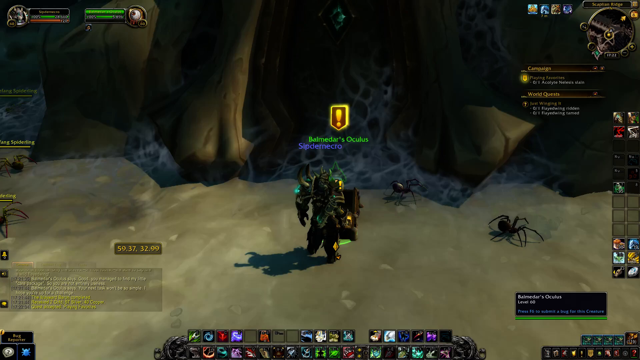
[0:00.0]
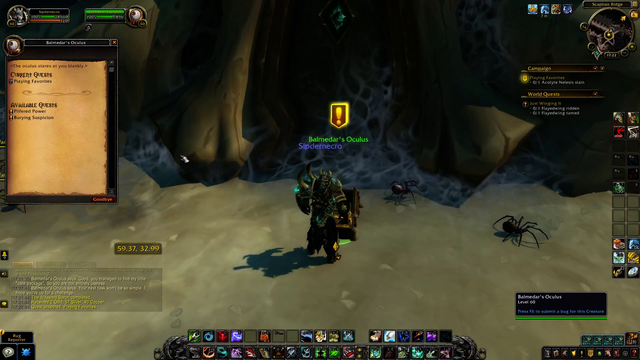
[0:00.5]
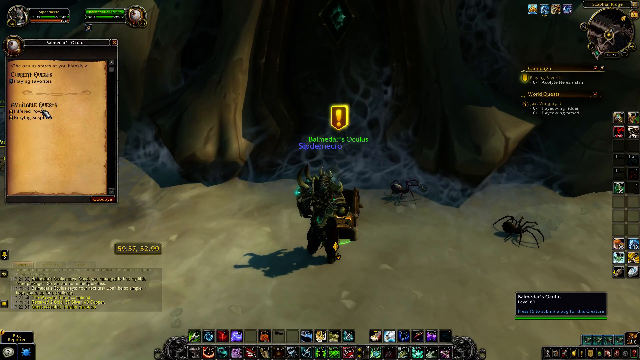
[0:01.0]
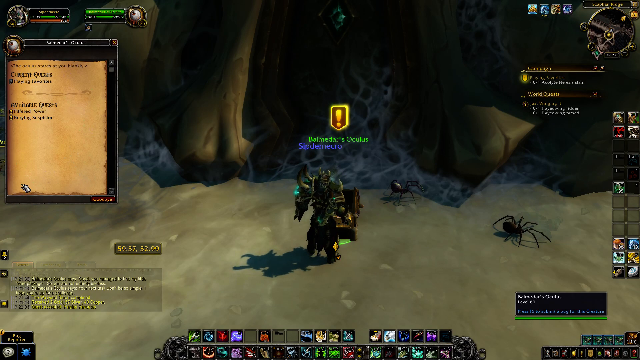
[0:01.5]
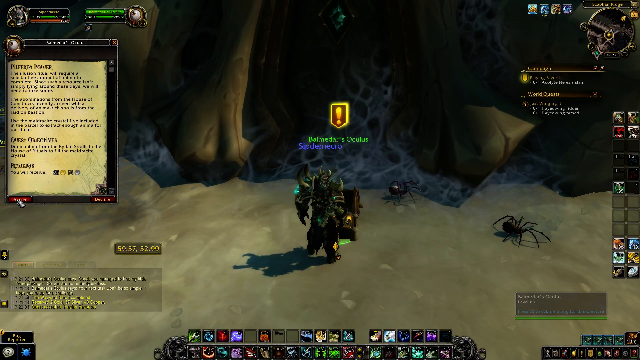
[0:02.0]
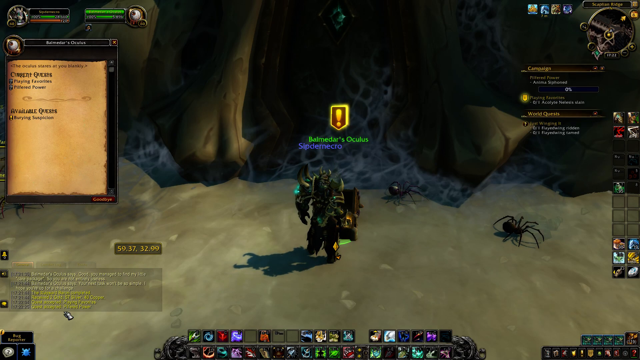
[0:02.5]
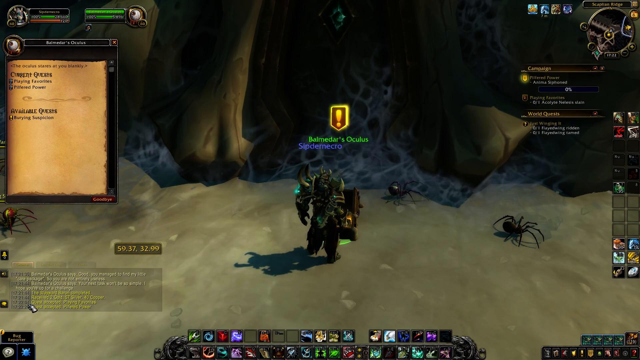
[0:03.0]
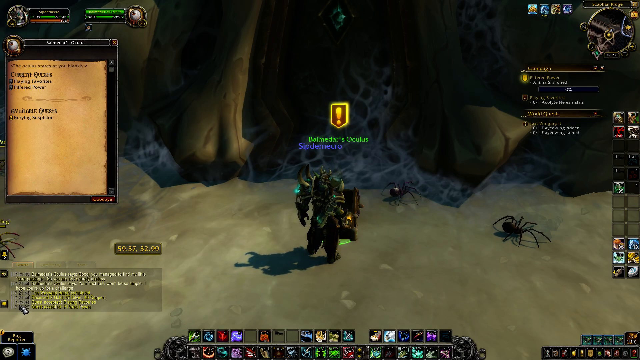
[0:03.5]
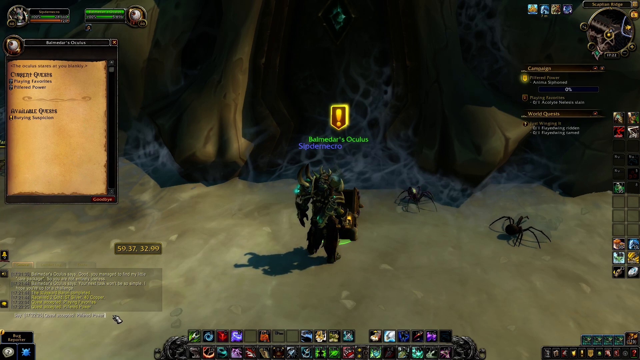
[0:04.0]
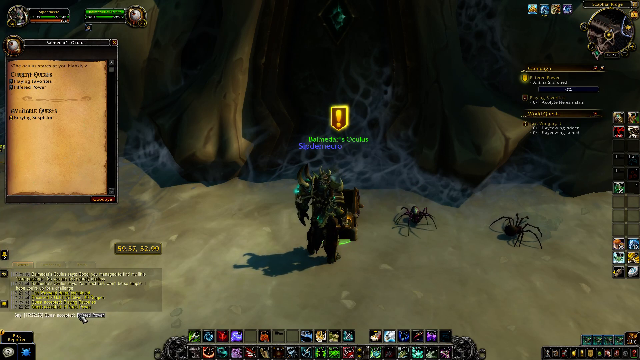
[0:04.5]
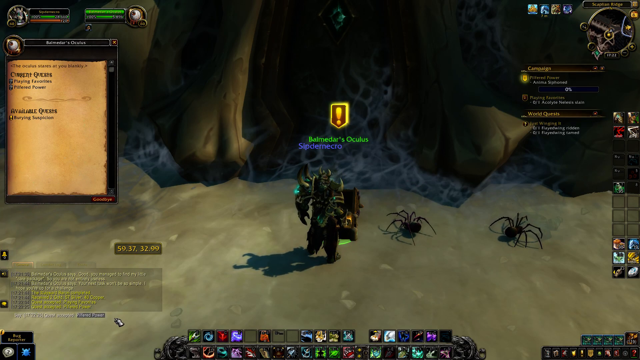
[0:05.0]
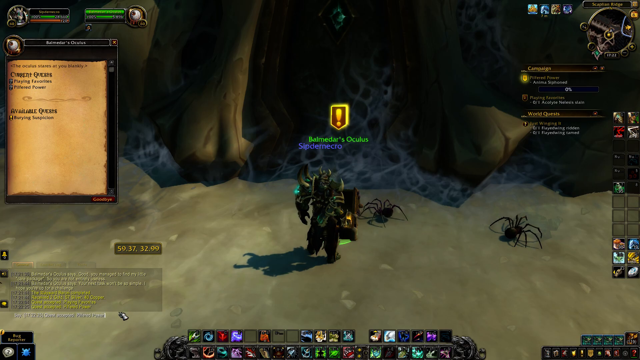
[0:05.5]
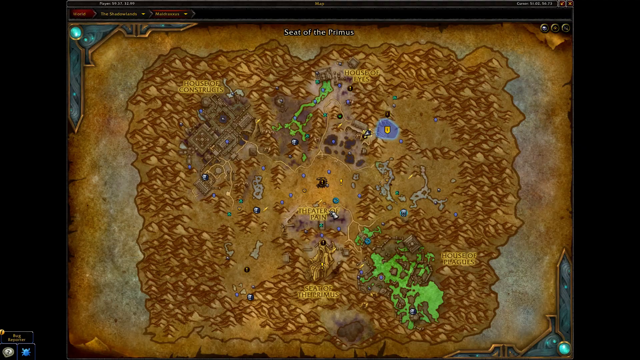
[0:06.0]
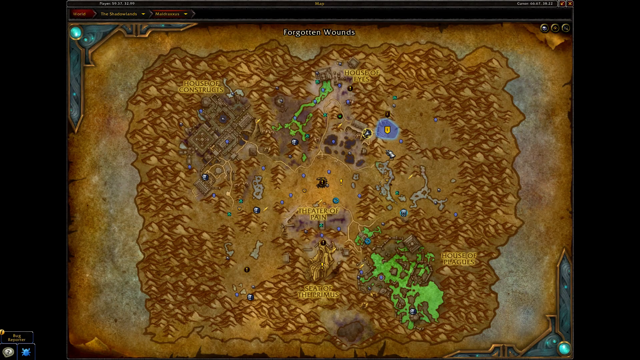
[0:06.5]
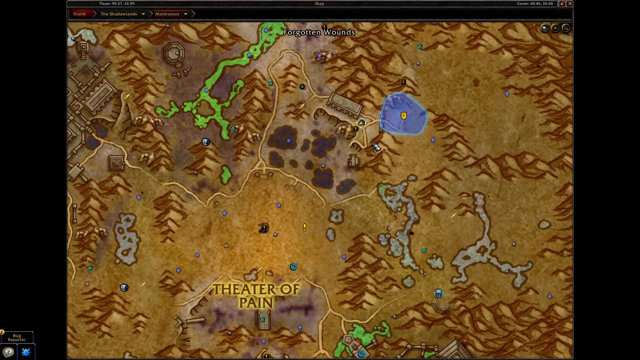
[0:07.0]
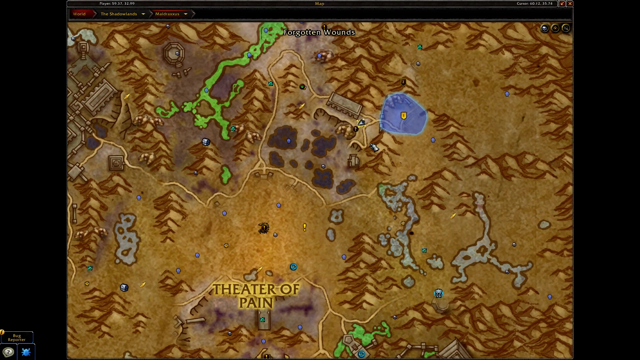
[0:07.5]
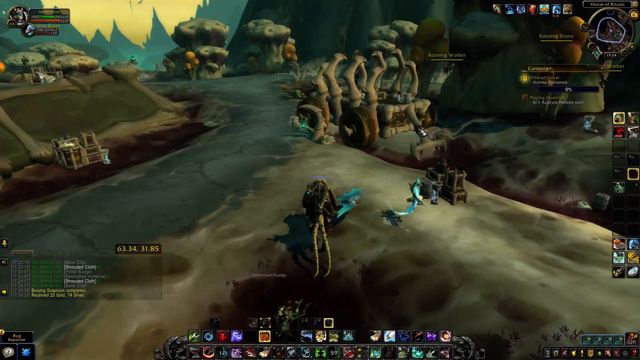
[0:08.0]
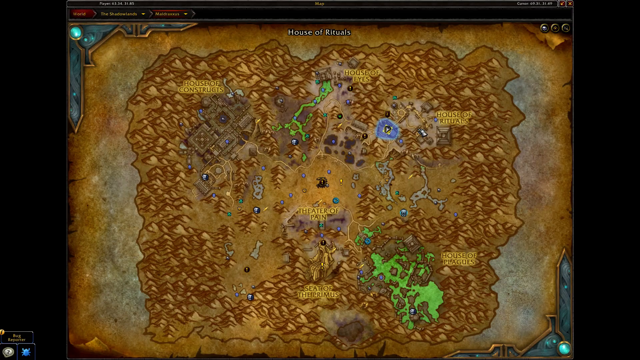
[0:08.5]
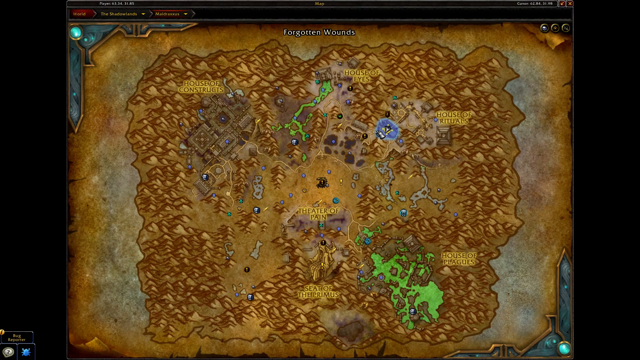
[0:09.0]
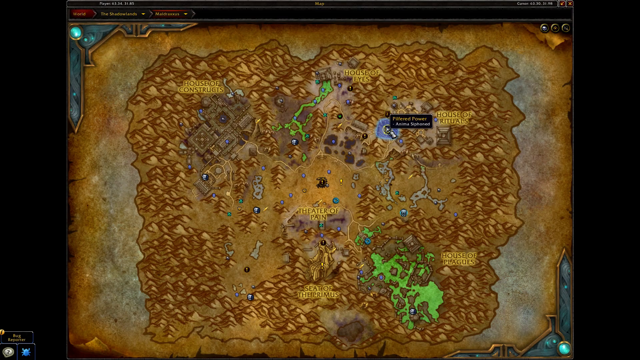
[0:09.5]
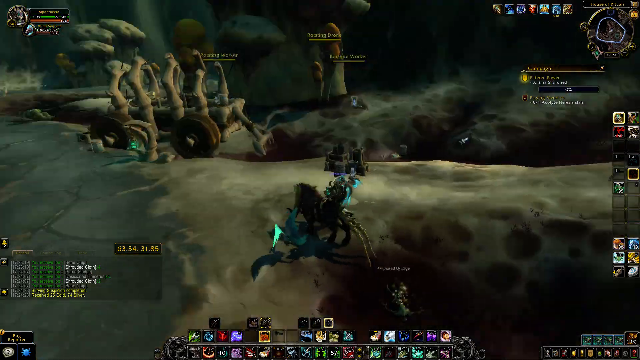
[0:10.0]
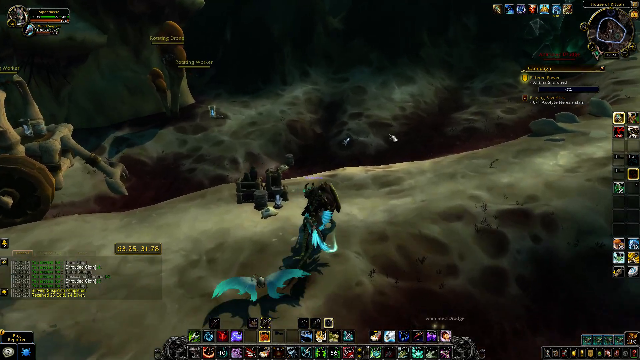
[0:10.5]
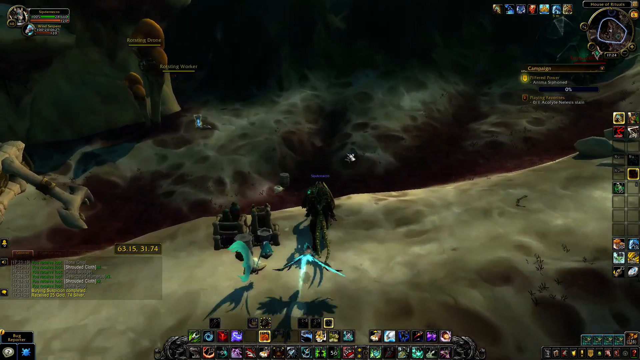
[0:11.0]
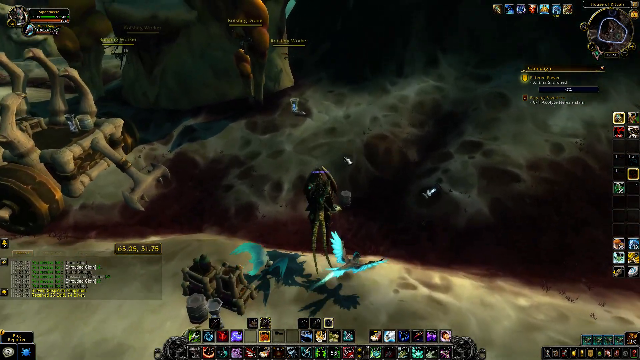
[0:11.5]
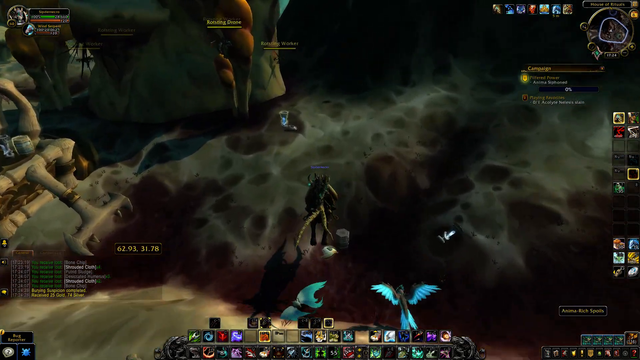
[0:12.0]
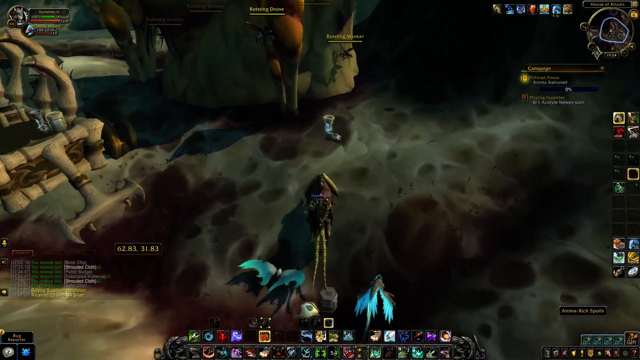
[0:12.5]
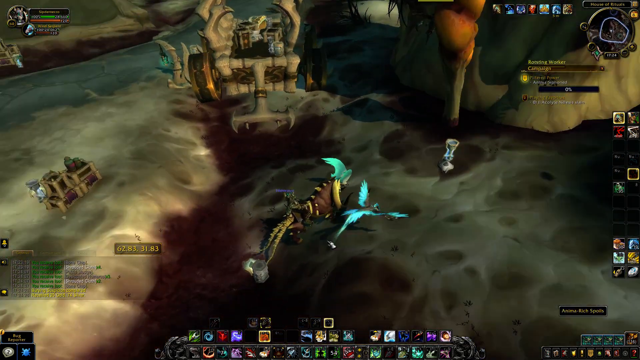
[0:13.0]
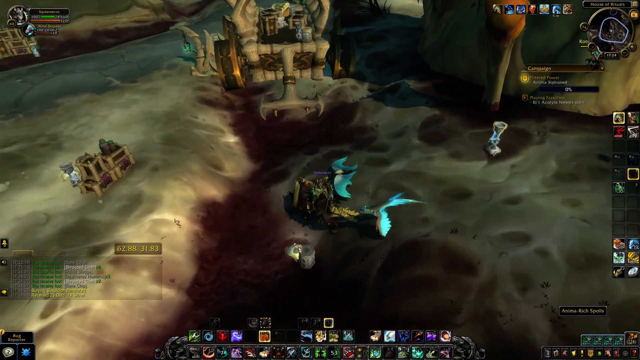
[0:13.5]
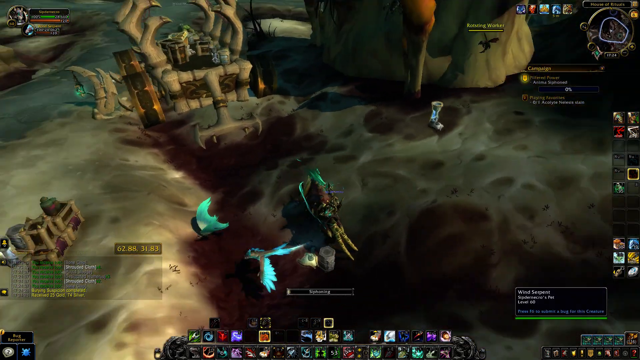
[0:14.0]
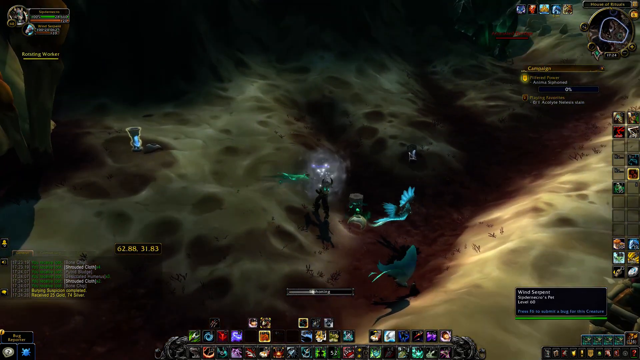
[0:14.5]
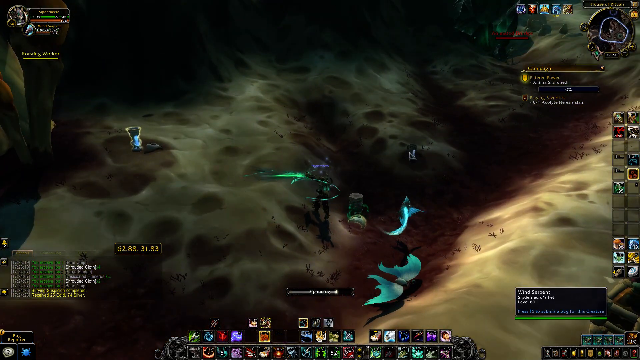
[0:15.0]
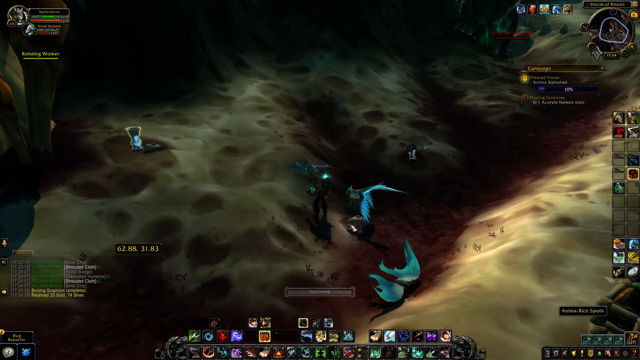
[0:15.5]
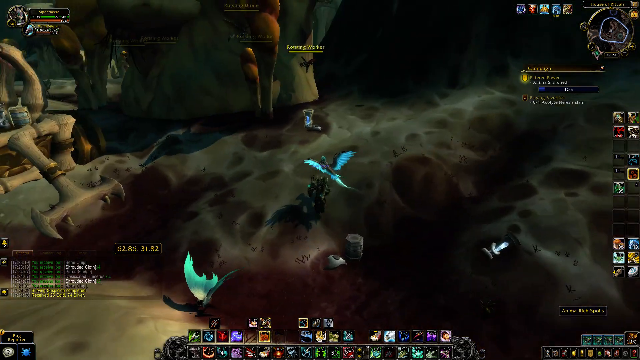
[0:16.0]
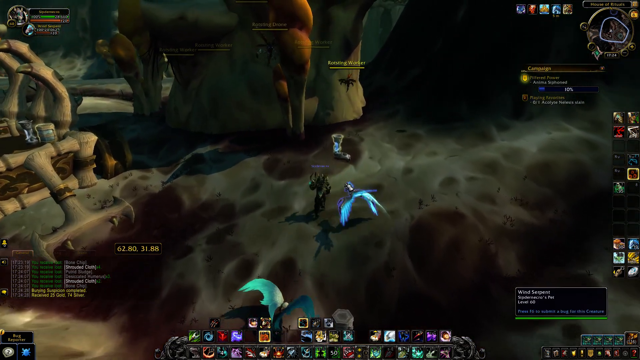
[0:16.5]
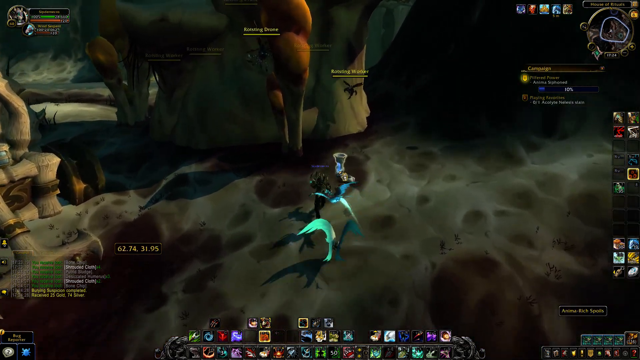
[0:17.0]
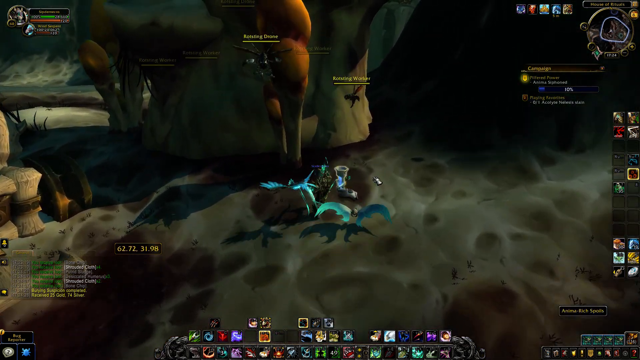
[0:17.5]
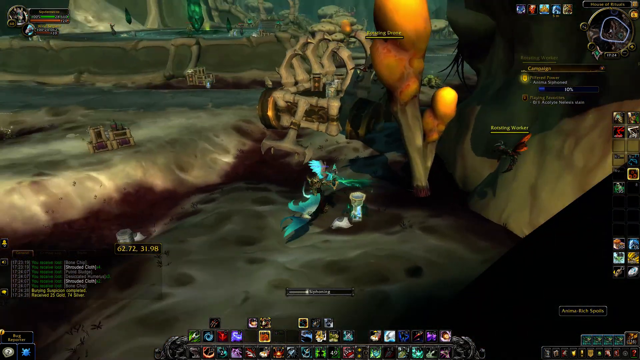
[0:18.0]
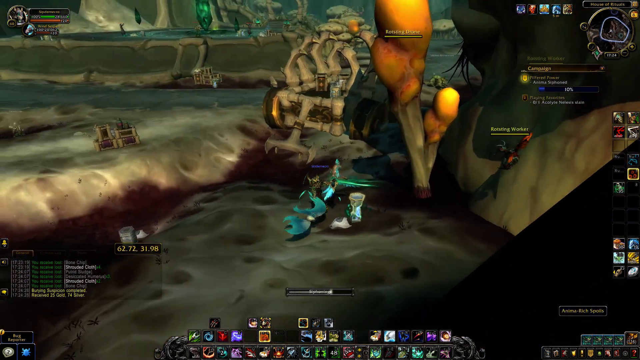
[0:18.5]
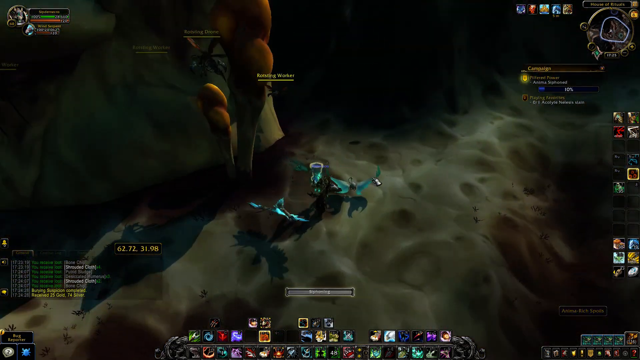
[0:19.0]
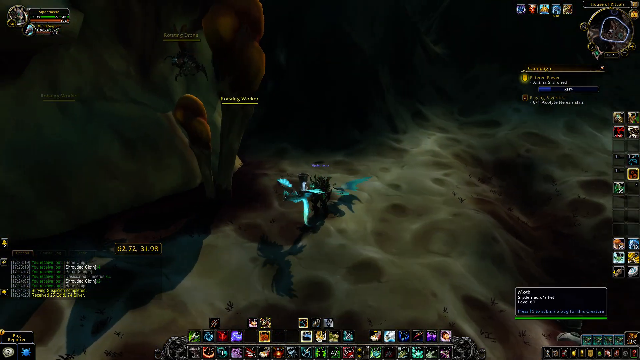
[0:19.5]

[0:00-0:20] A video game shows what looks like some sort of action figure robot, apparently trying to find possibly a treasure chest; it does not seem to be a fighting game. There is a book to the left with information about the game, and two spiders are visible off to its right side. The video switches to a map, with the character seemingly trying to find possibly some type of treasure, and then switches back to what looks more like fighting. The action figure is black, and there appear to be two blue dragons. They are fighting each other, with lines of green light going between them. It seems more like the action figure is running away while the bats kind of fly after it.